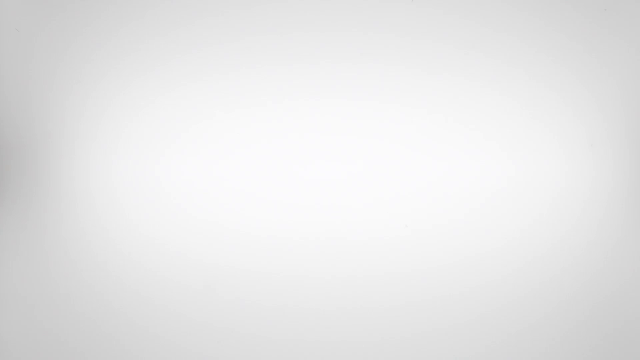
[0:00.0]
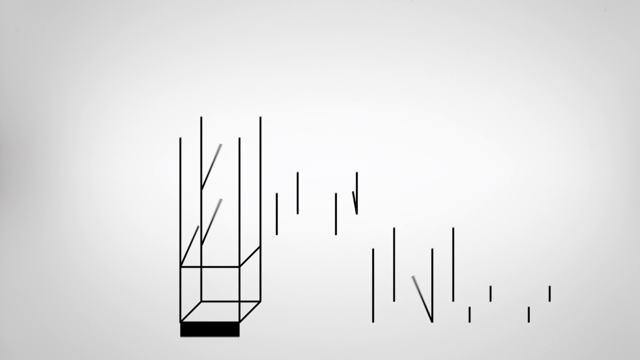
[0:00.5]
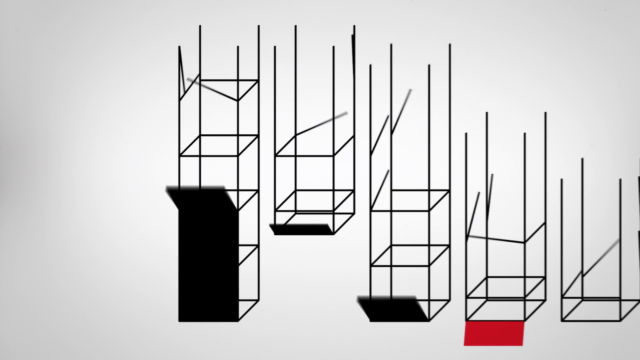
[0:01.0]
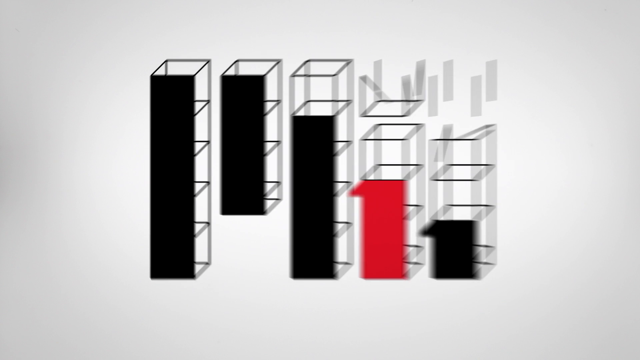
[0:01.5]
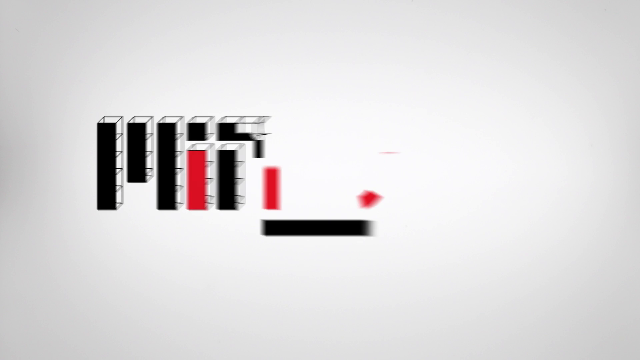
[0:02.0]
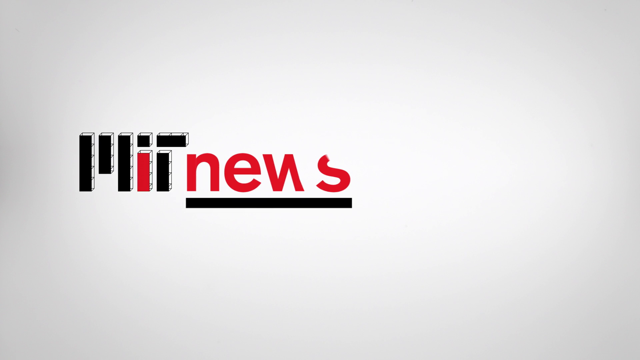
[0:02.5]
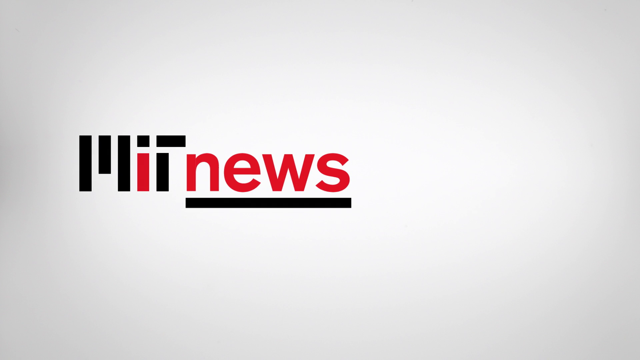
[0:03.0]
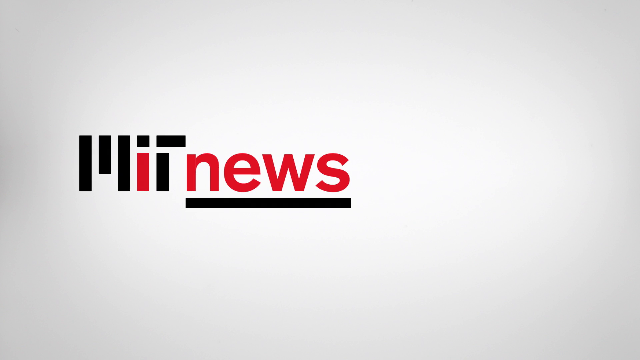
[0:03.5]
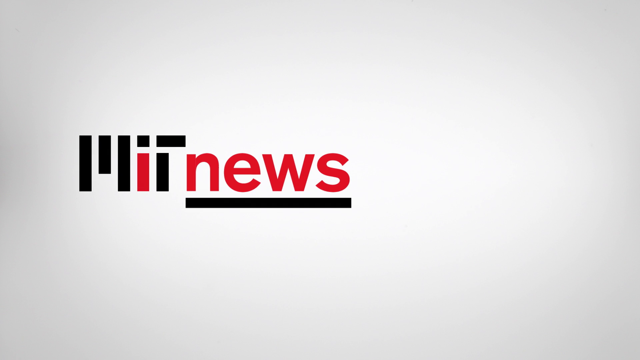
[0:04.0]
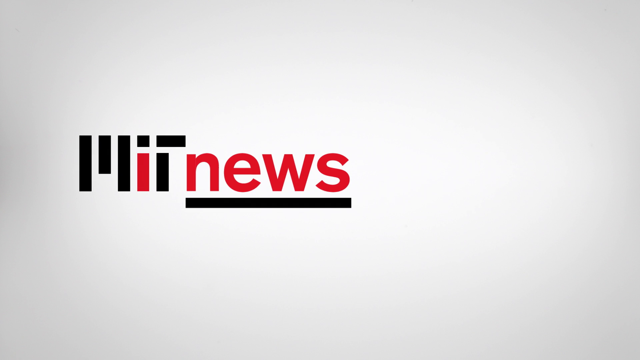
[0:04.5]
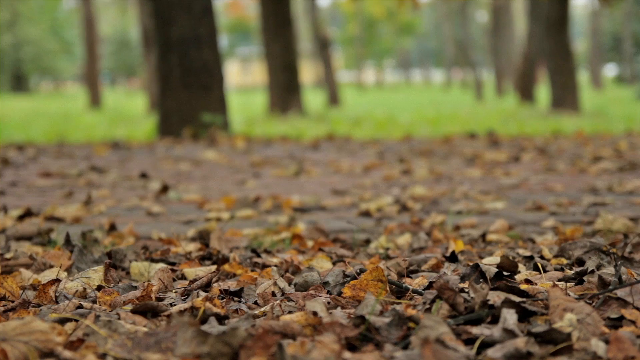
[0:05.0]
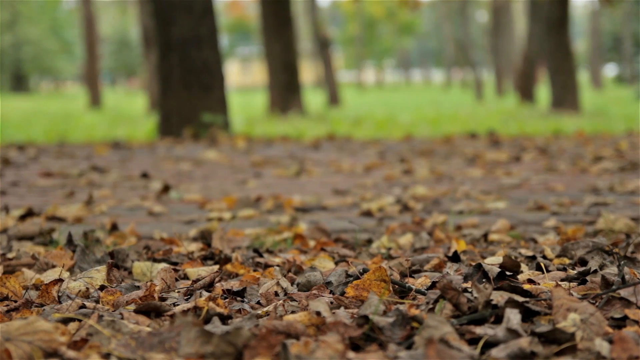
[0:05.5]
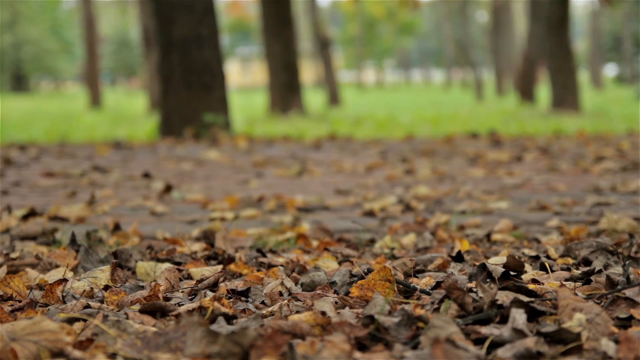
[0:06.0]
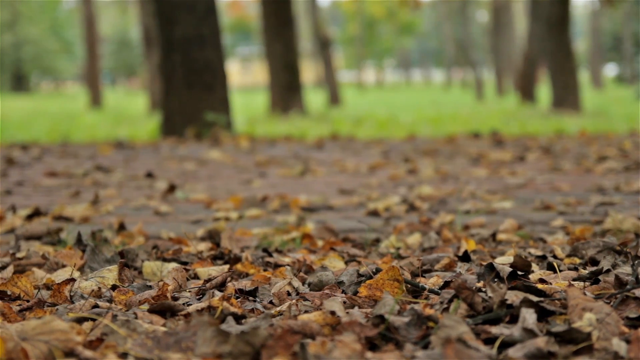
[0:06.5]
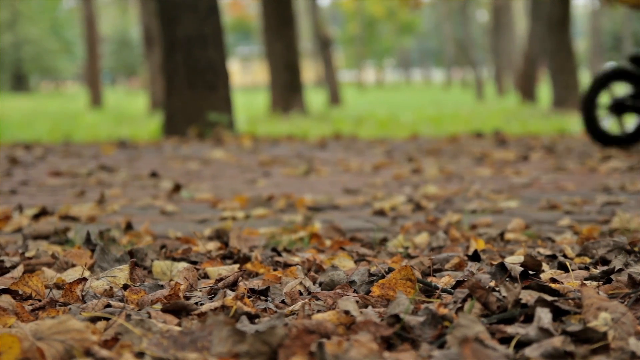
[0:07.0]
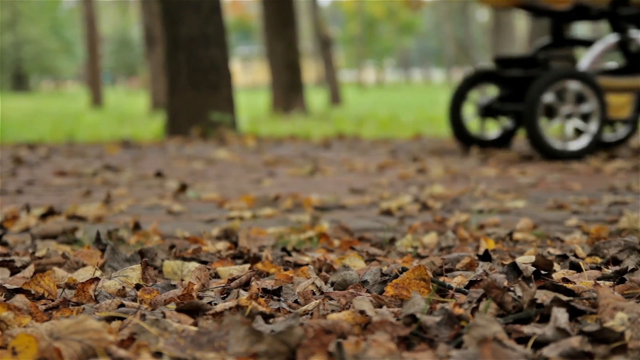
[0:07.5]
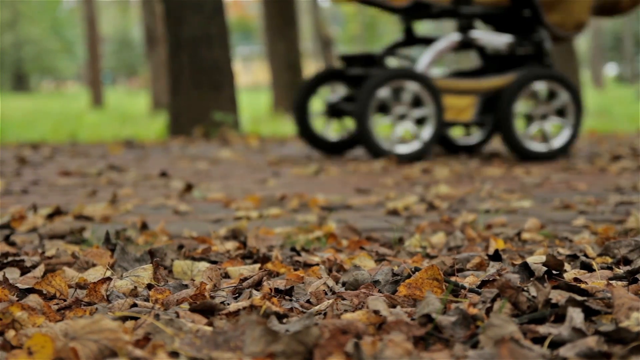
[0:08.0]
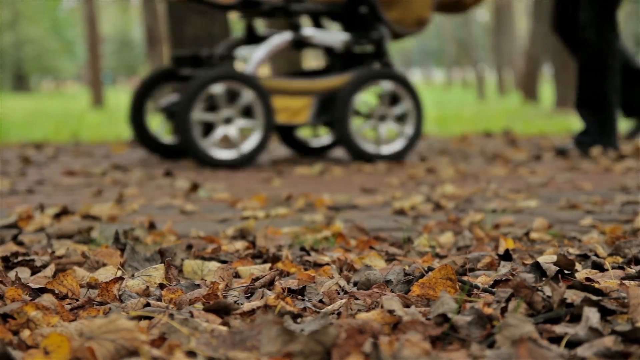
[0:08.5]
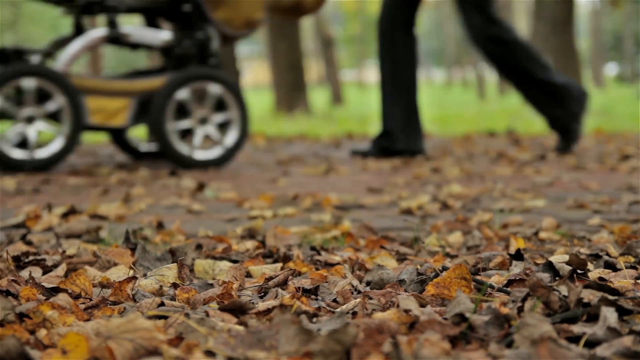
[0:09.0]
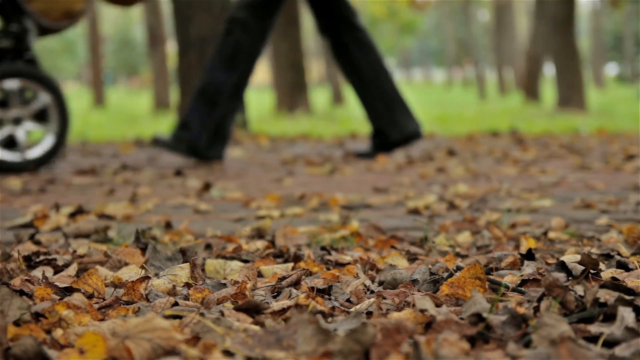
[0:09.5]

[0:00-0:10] A 3D image opens the video, almost like 3D squares being built on screen from individual pieces. The fronts of the squares are blacked out, and they stand at varying levels: one has four, one has three, one has four, one has three and one has three. The first three have black on them, the fourth has red, and the last has black. Then it says "new", so the animation was building some type of logo. The scene then moves outside to fallen leaves on the ground, with the trees and grass beyond blurry. A person pushes a stroller across the leaves.